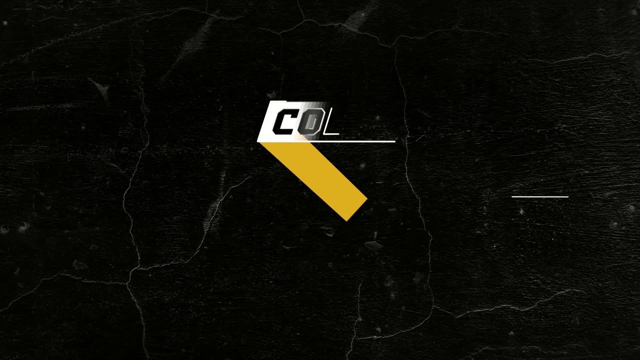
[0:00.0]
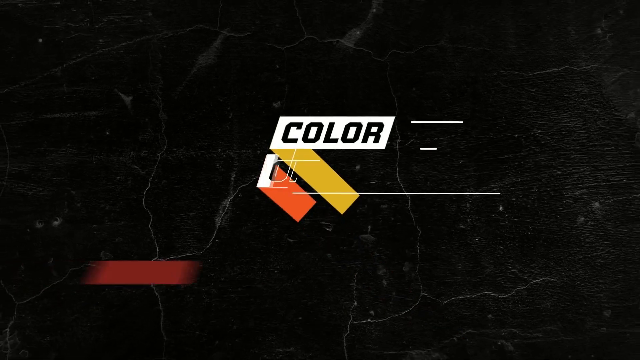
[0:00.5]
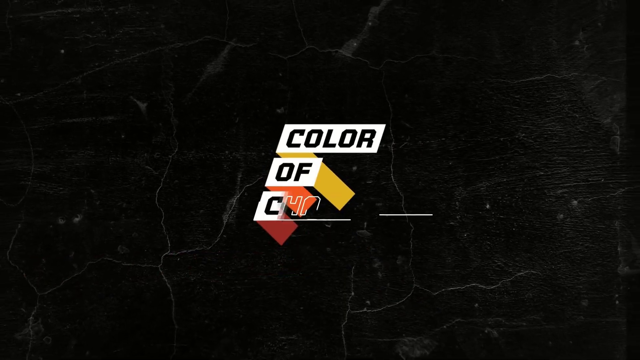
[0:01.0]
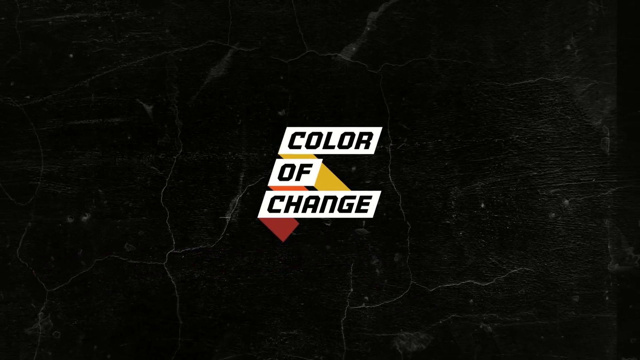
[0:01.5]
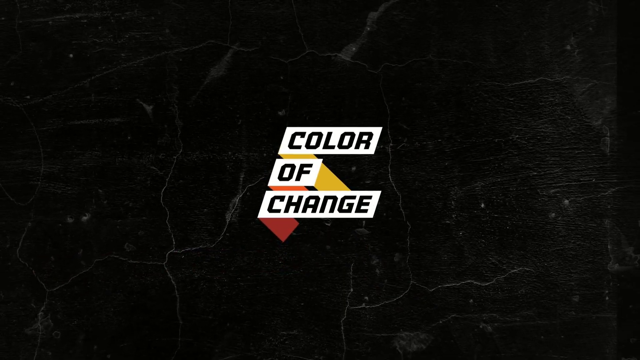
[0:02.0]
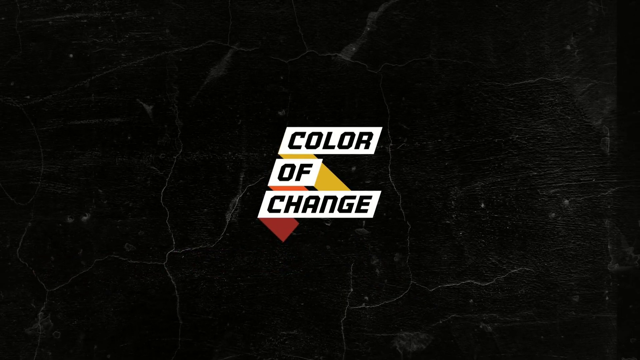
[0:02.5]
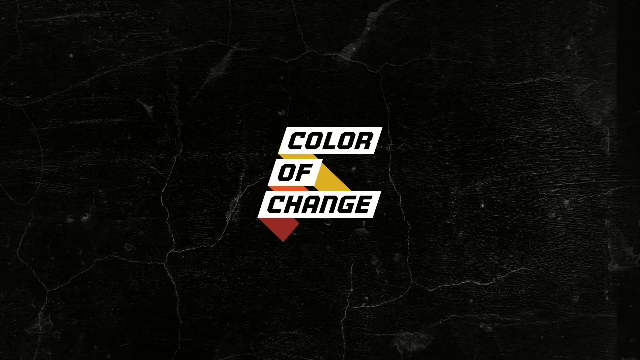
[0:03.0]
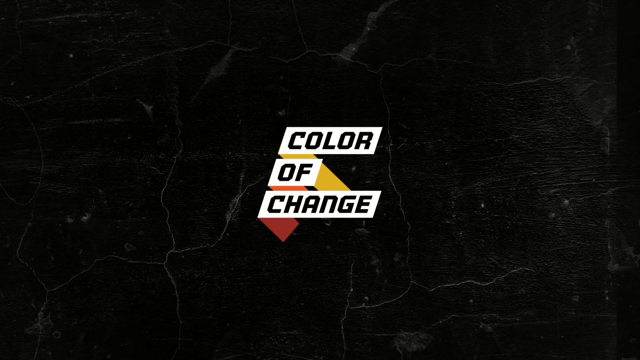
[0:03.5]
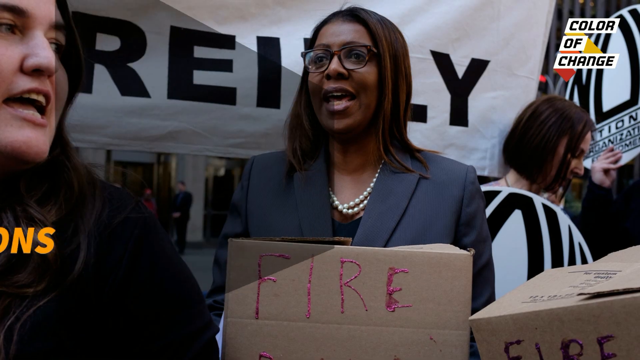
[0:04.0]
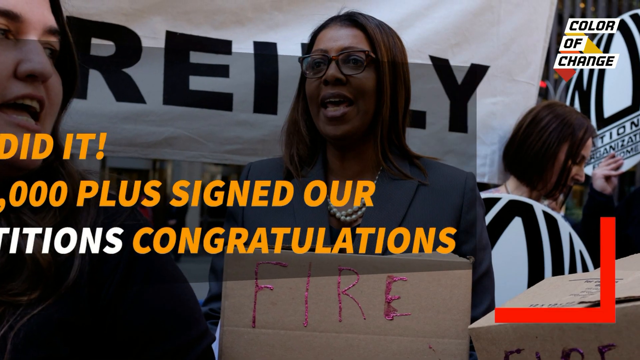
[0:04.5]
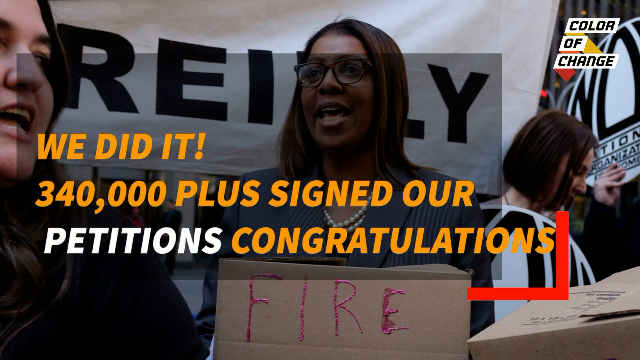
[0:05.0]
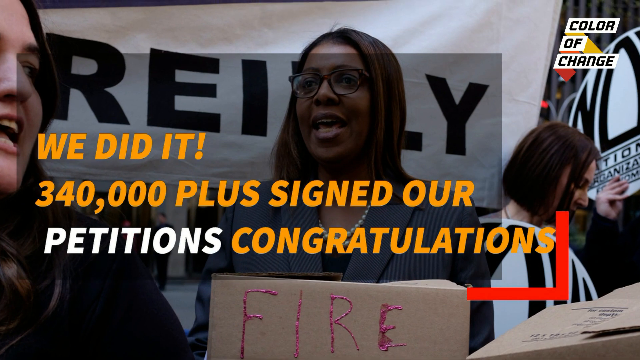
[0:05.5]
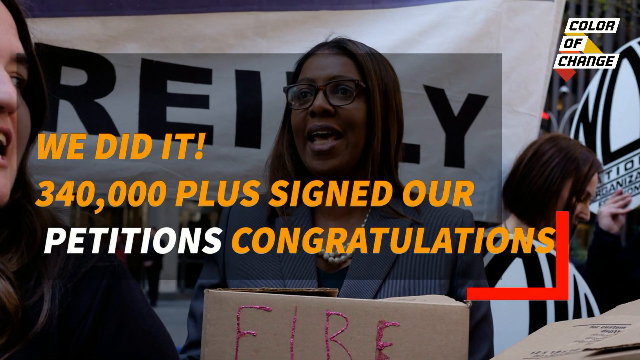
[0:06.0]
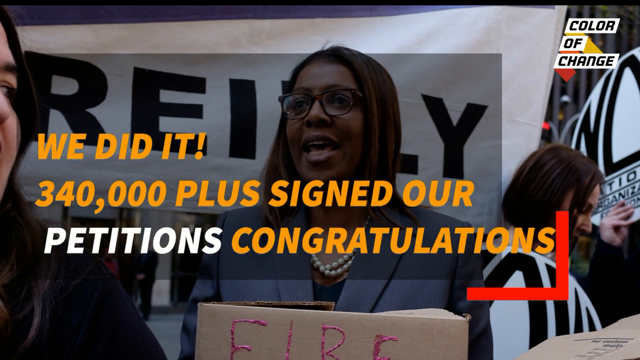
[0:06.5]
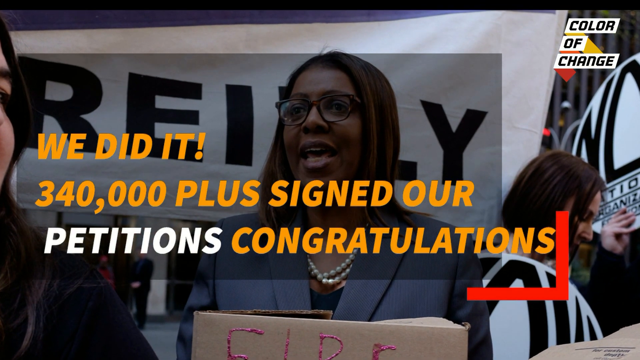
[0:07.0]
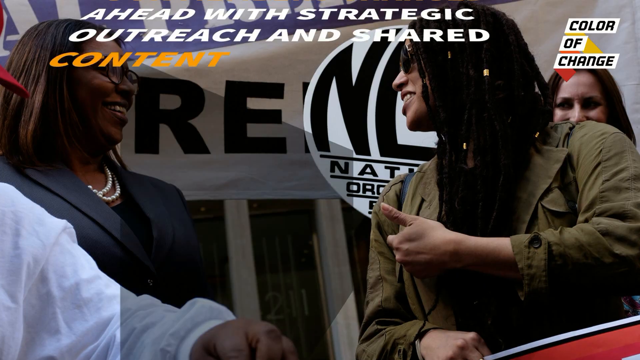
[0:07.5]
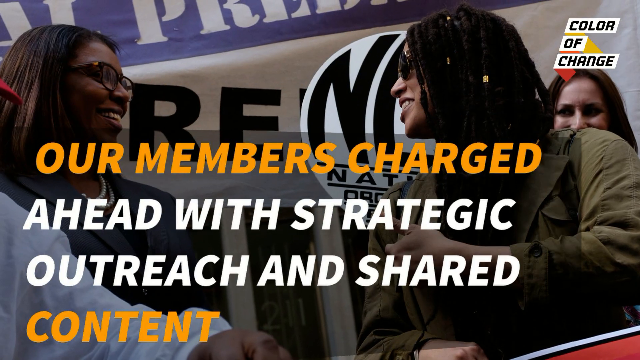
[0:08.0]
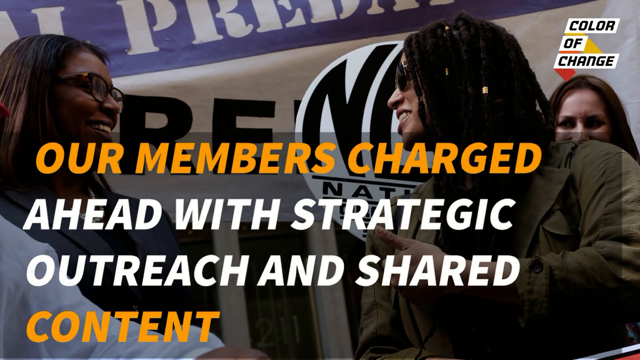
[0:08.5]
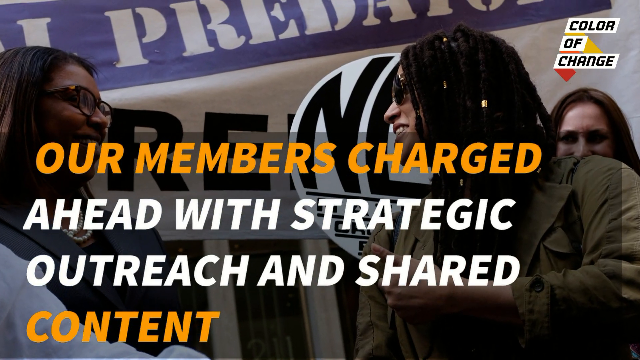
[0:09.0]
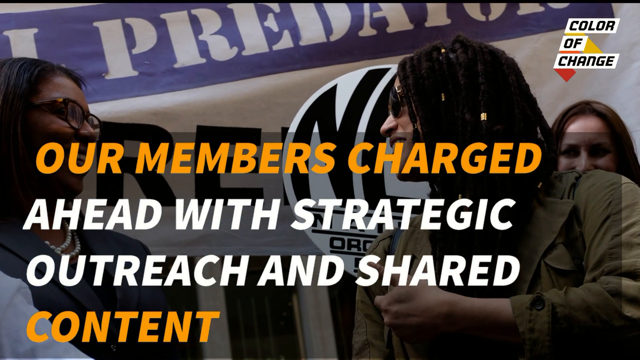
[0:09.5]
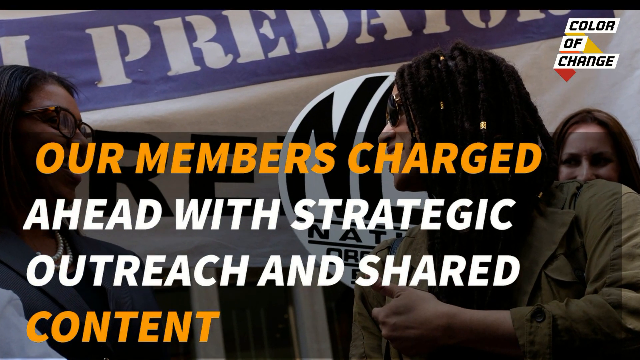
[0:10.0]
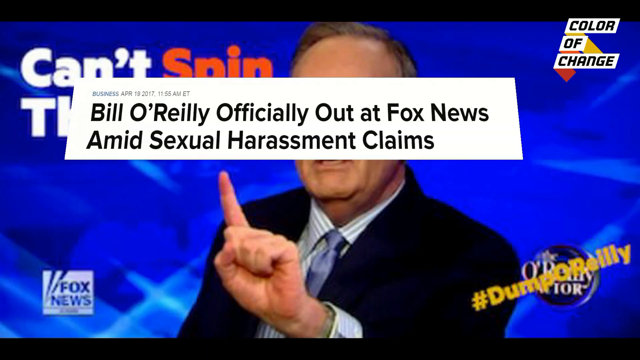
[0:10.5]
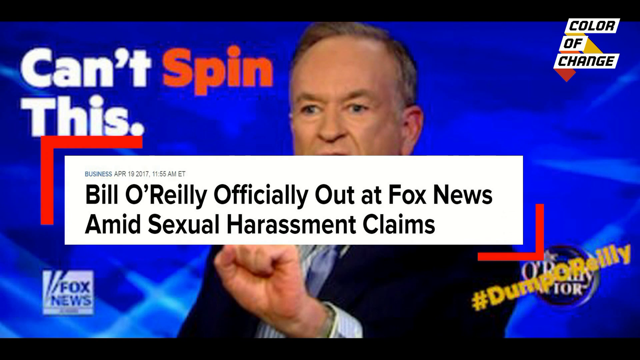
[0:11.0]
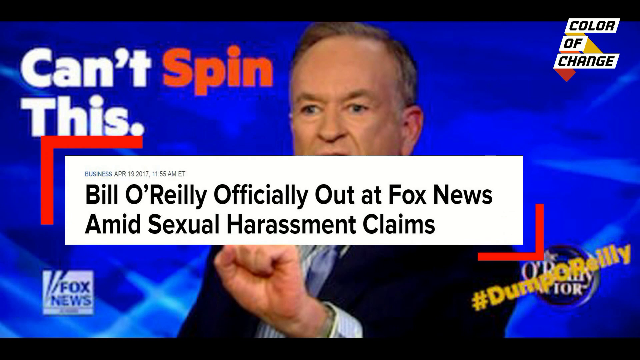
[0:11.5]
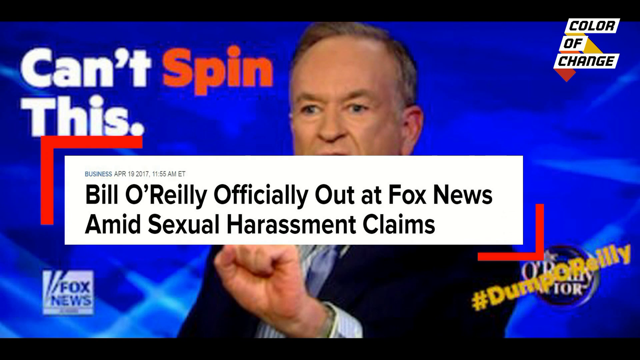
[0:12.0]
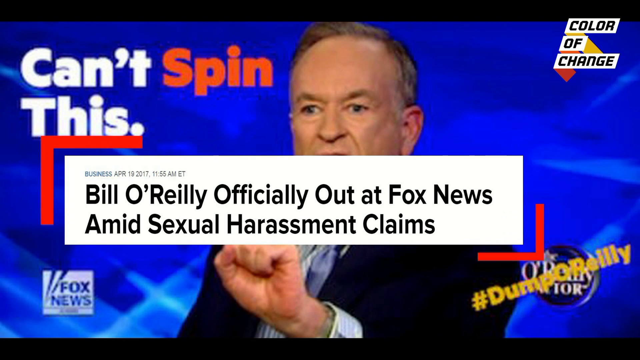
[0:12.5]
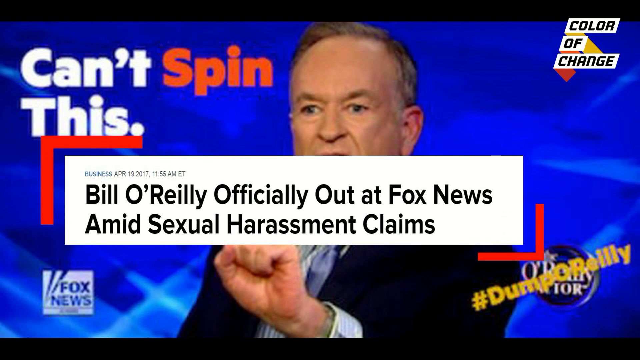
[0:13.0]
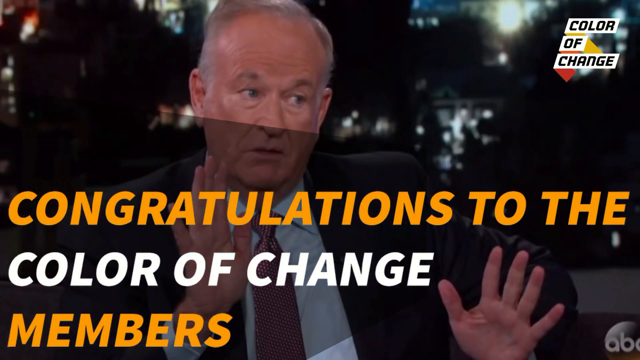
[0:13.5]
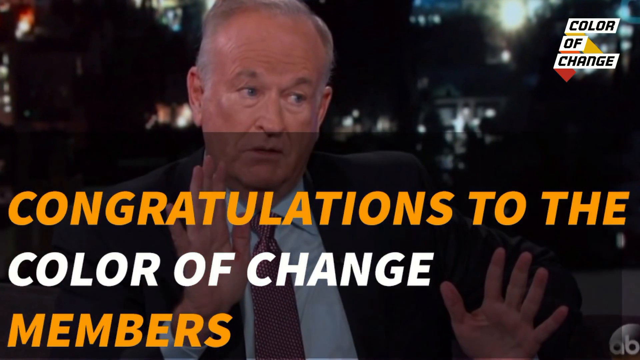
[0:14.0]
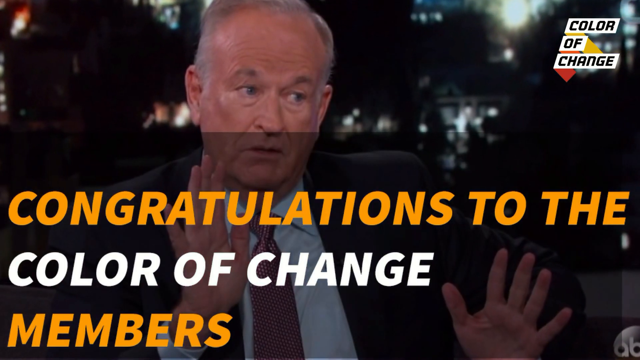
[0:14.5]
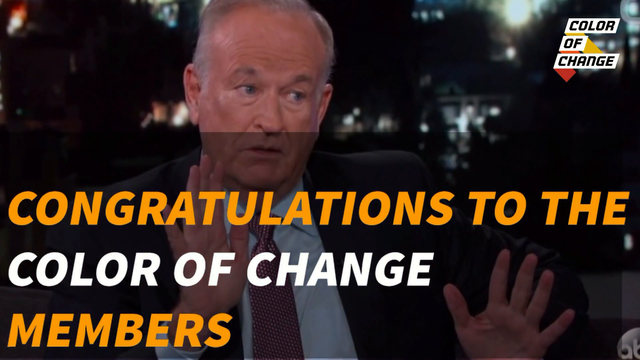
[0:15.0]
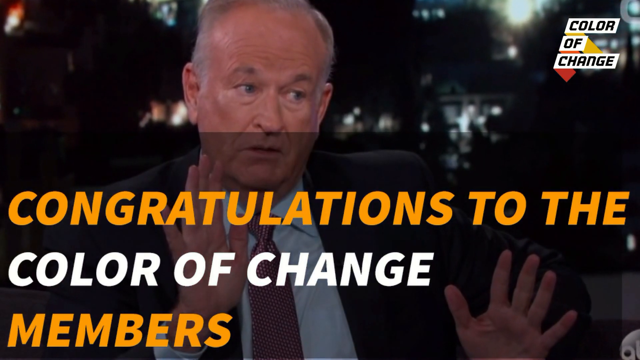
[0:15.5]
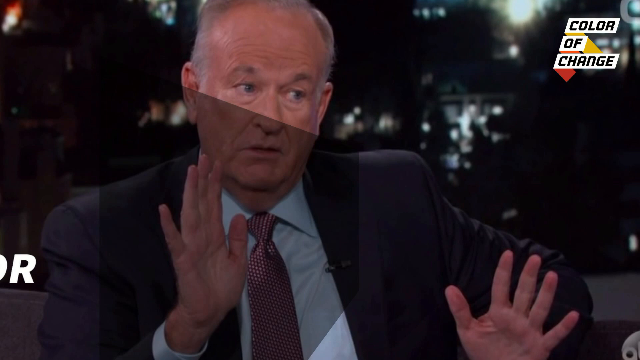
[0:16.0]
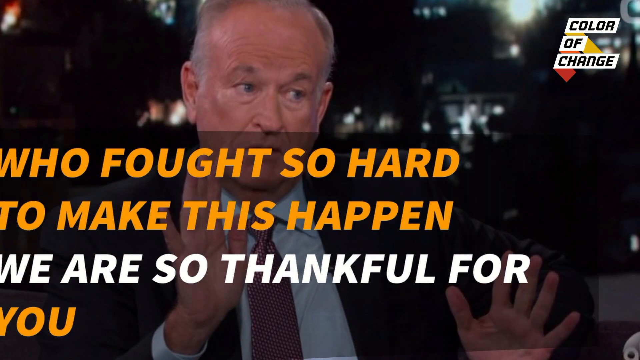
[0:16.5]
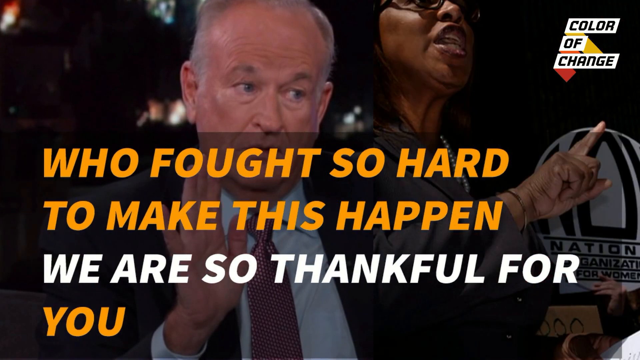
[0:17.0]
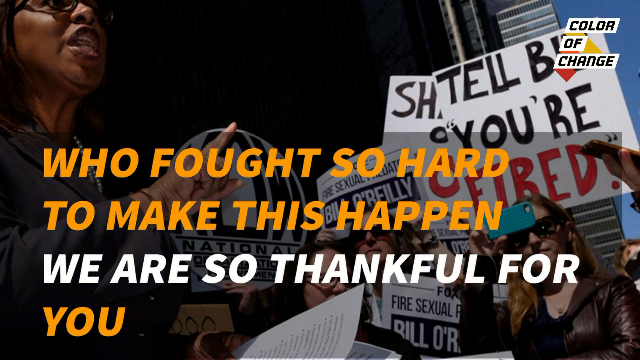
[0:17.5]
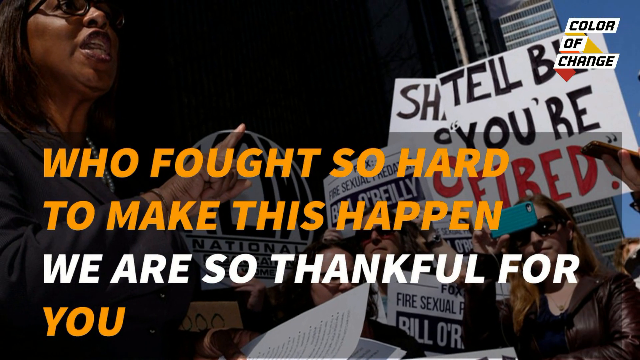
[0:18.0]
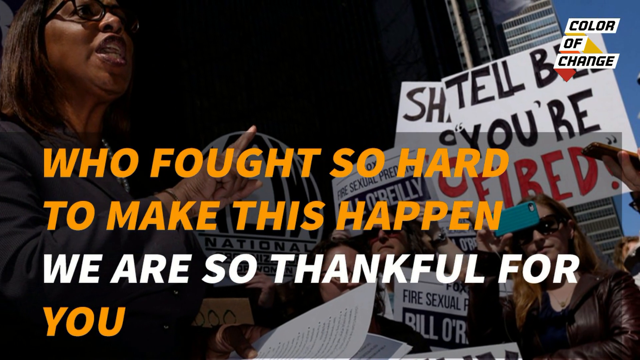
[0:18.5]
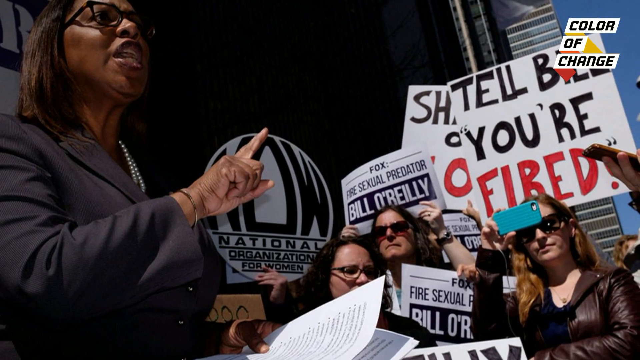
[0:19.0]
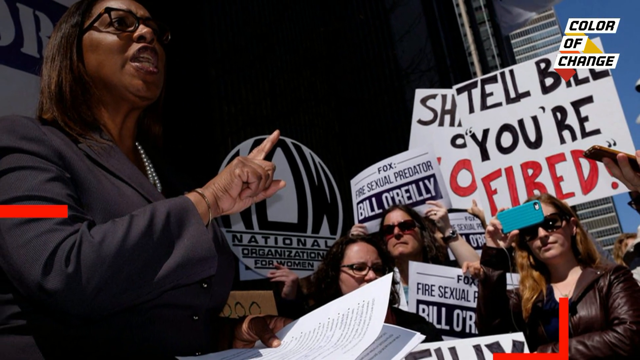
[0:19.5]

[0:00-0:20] A news video issued by Colour of Change congratulates itself, with text reading "we did it, 340,000 plus signed our petitions, congratulations." An African-American woman leads a protest, holding a piece of cardboard with the word "fire" written on it in red text. The video next states that "our members charged ahead with strategic outreach and shared content." The same African-American woman is seen talking to another African-American woman who has dreadlocks and sunglasses. The campaign is against Fox News host Bill O'Reilly, and a photo of him appears, along with his catchphrase "can't spin this" and the name of his show, "the O'Reilly Factor," with "Dump O'Reilly" stamped on it. The video again congratulates the Colour of Change members. Bill O'Reilly is shown looking defensive, followed by the words "who fought so hard to make this happen, we are so thankful for you." The scene returns to the African-American woman leading a protest by the National Organisation for Women, where one sign reads "fire sexual predator Bill O'Reilly" and another reads "tell Bill you're fired."